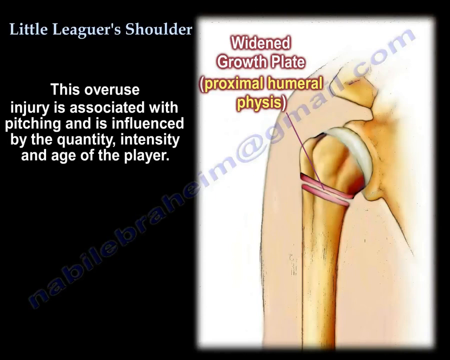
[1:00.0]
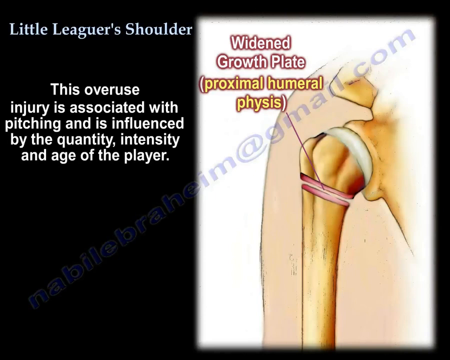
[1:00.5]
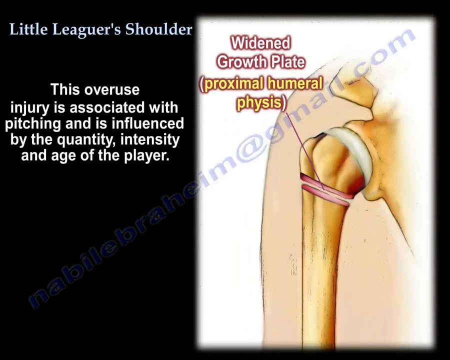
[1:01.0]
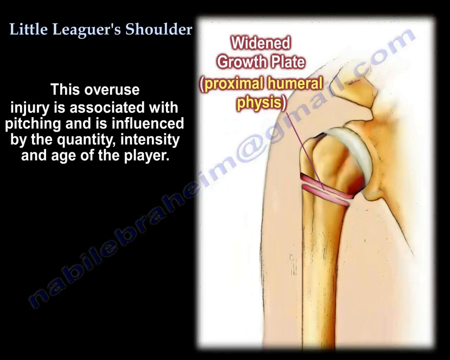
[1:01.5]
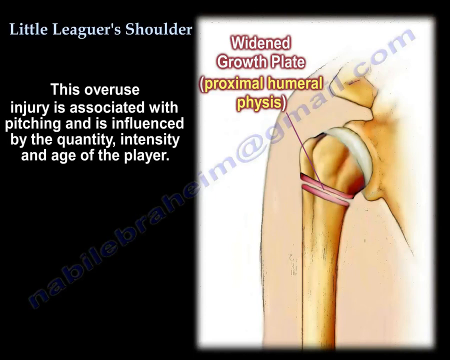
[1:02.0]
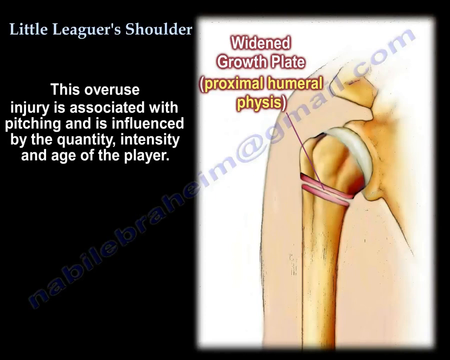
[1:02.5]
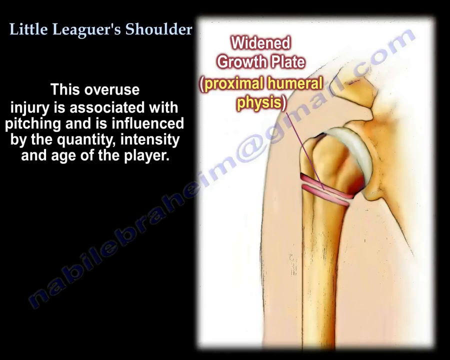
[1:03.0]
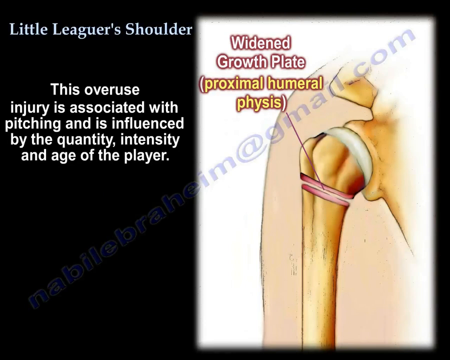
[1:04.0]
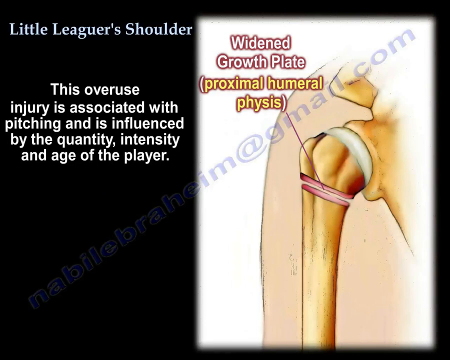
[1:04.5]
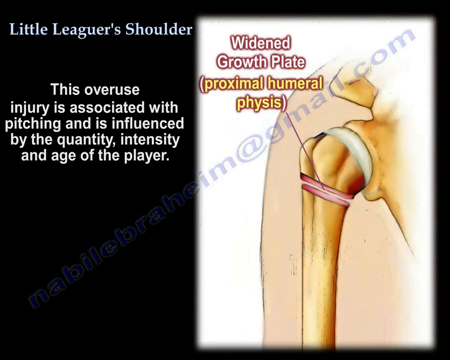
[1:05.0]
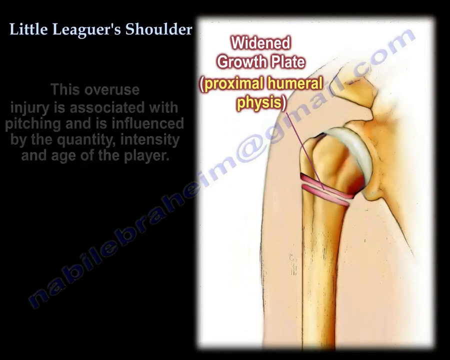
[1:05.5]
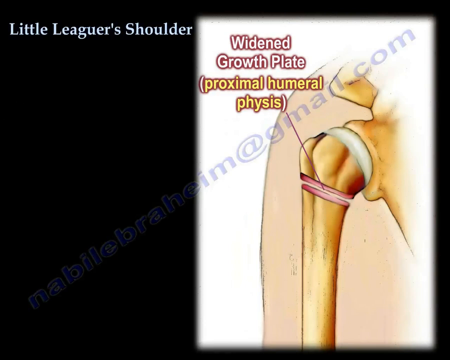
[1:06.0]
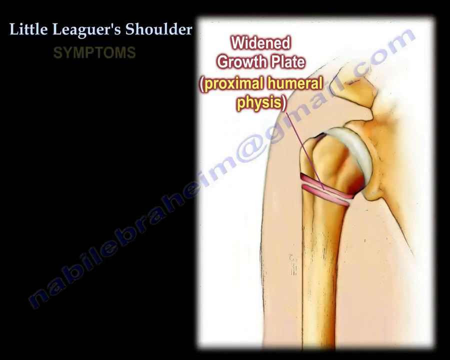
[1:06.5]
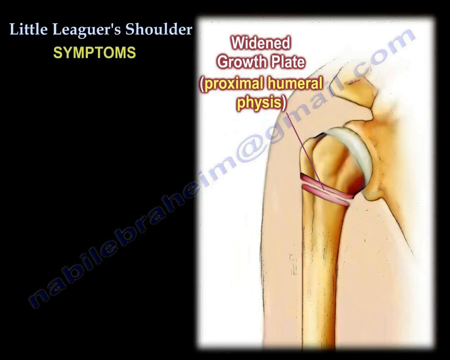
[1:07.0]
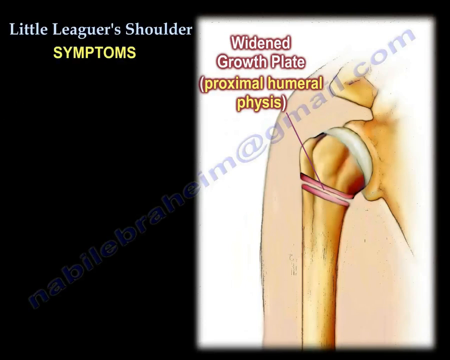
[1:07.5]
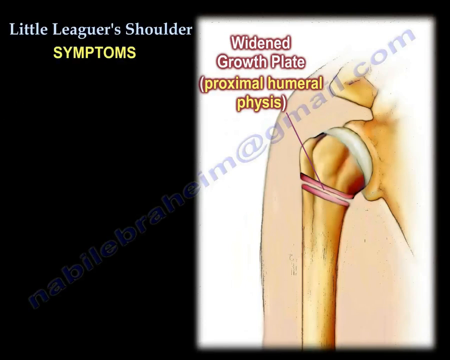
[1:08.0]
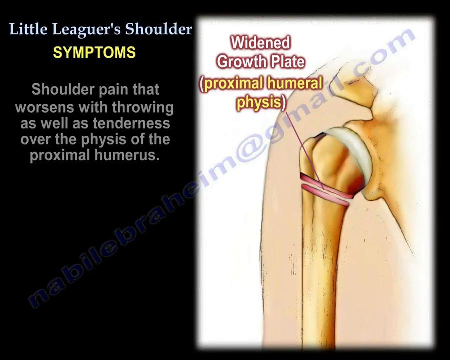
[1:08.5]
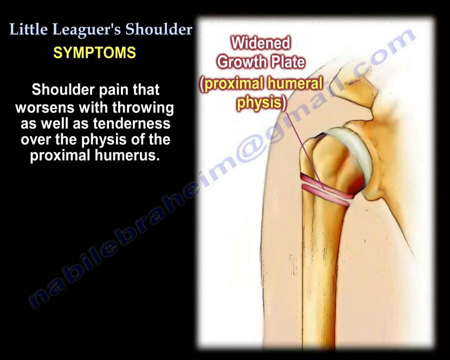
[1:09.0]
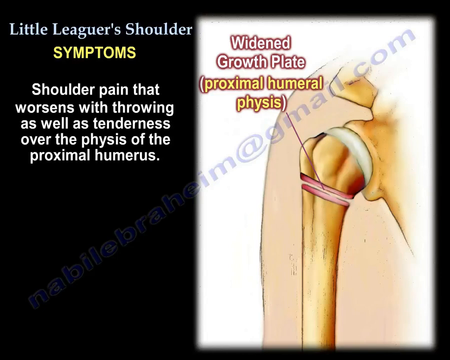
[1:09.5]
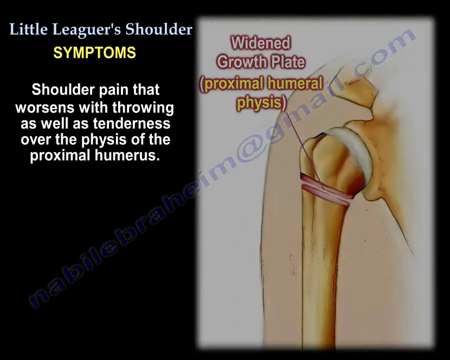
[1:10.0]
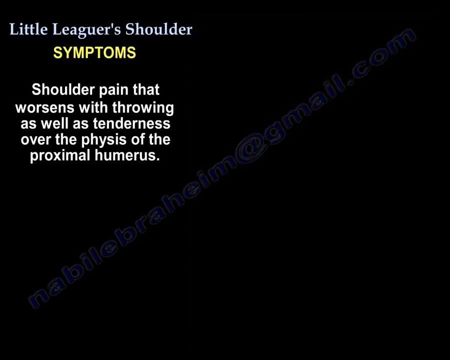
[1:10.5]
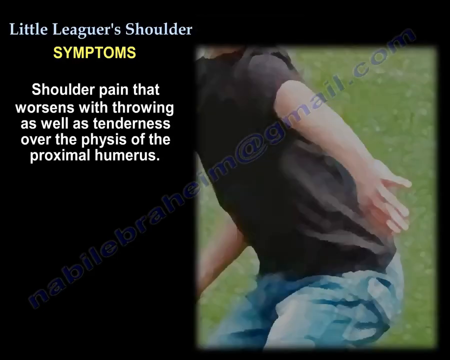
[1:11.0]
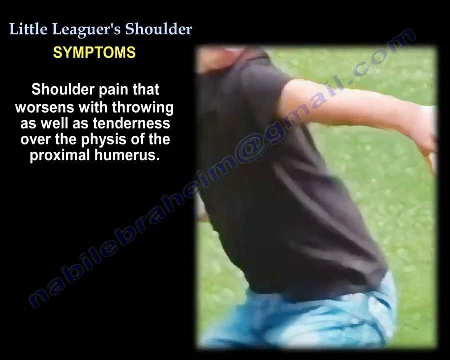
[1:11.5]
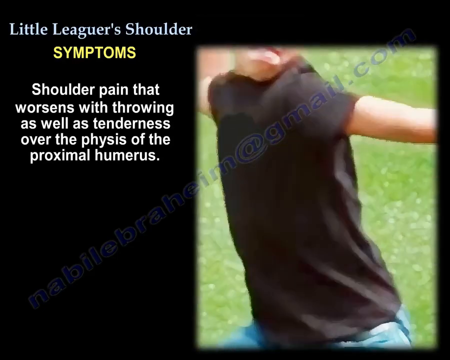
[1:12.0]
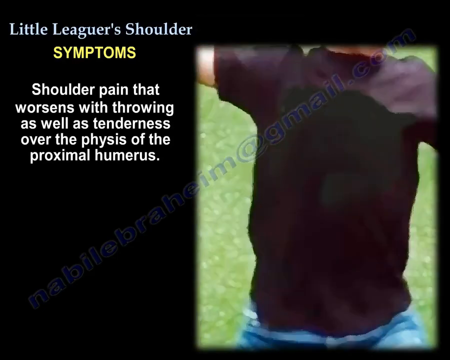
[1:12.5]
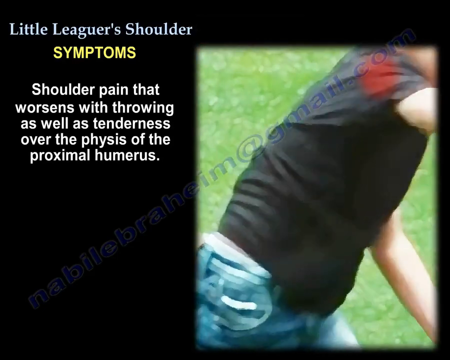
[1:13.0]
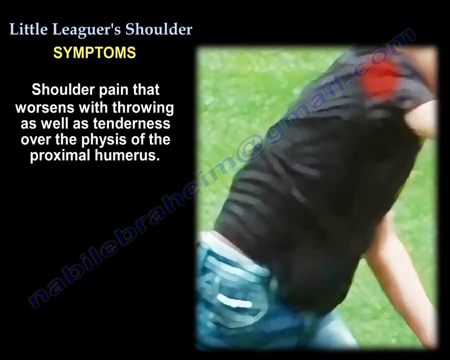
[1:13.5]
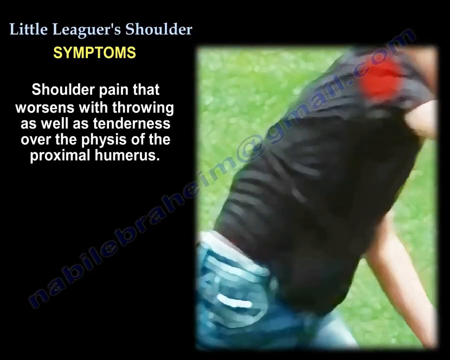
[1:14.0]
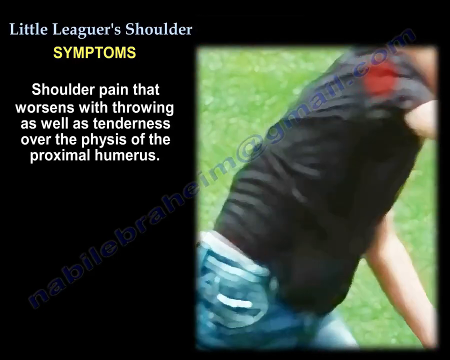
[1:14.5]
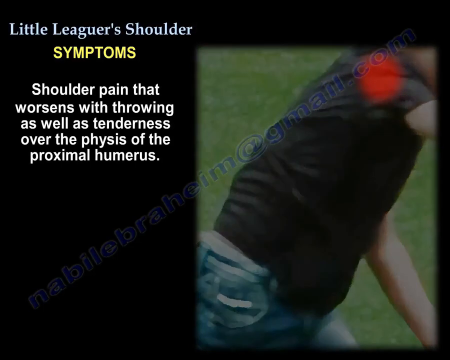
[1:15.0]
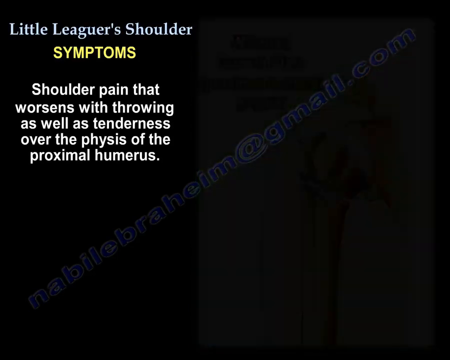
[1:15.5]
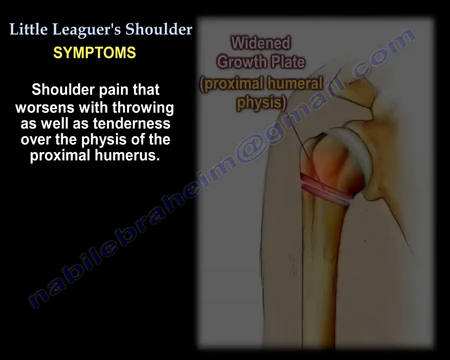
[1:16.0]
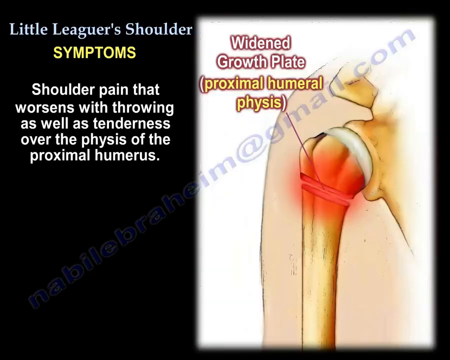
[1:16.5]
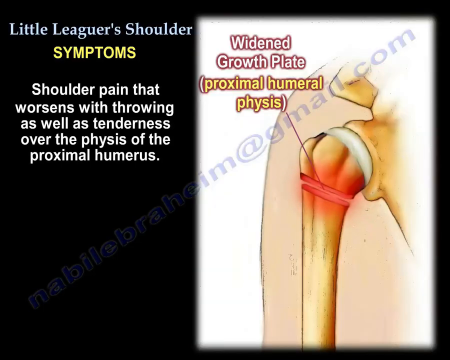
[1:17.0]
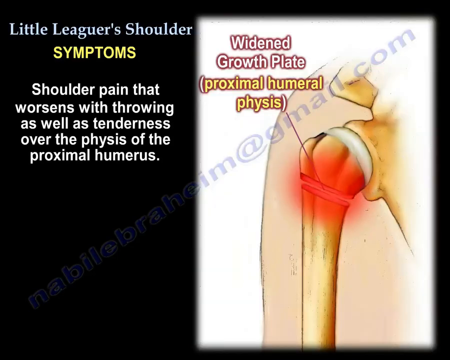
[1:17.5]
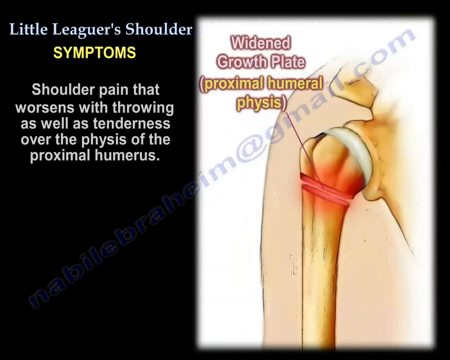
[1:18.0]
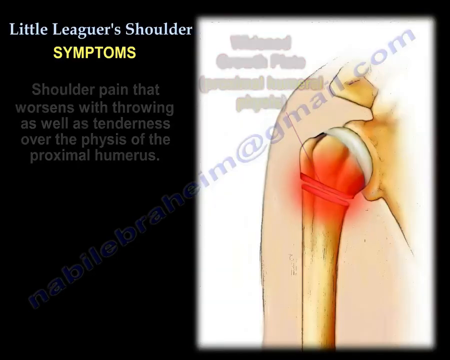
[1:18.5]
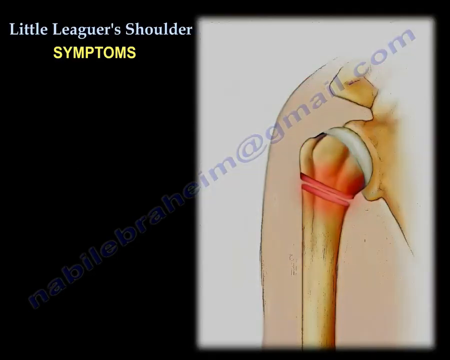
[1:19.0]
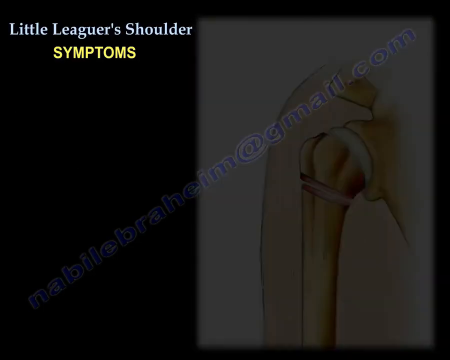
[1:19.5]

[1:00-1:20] On the right-hand side of the screen is a close-up diagram of a shoulder showing its bones, with a caption that says "widened growth plate, proximal humeral physis" and an arrow pointing to this area. At the top left it says "little leaguers shoulder", and below that "this overuse injury is associated with pitching and is influenced by the quantity, intensity, and age of the player." These words go away and a new word emerges in all uppercase yellow letters: "symptoms". Below that it reads "shoulder pain that worsens with throwing" as well as "tenderness over the physis of the proximal humerus." A slow-motion video then shows a young man in jeans and a black shirt throwing a baseball, before it cuts to the close-up diagram of the shoulder showing a red, inflamed area on the shoulder socket. This then cuts away.